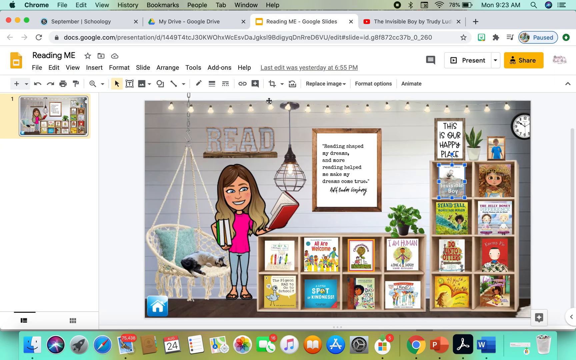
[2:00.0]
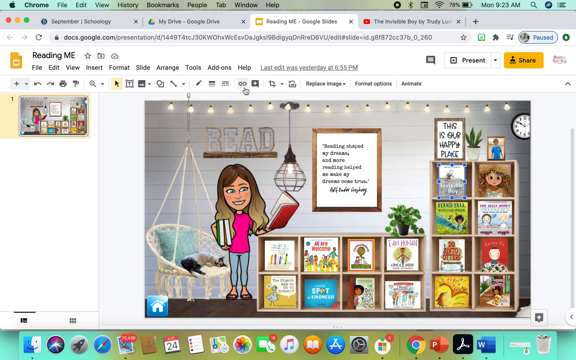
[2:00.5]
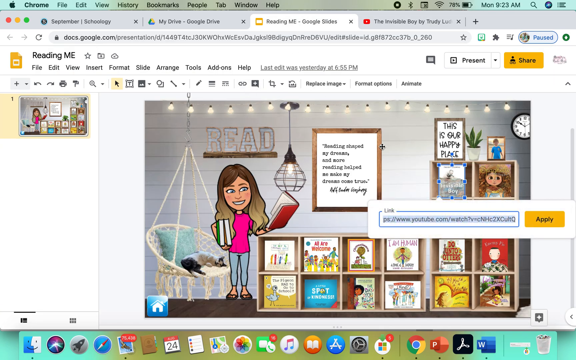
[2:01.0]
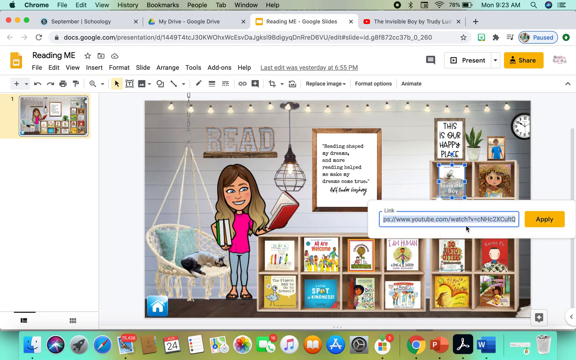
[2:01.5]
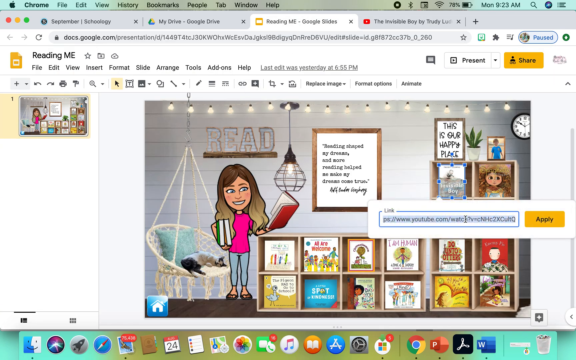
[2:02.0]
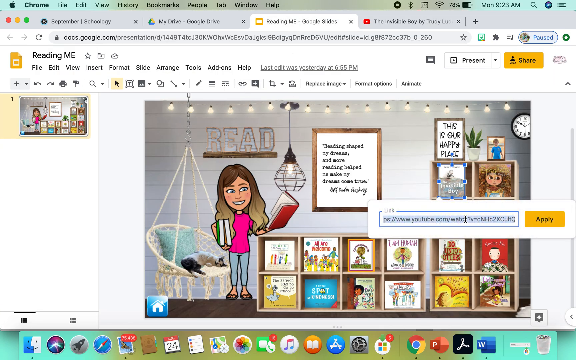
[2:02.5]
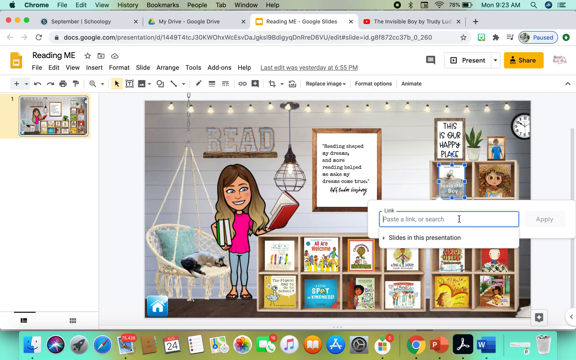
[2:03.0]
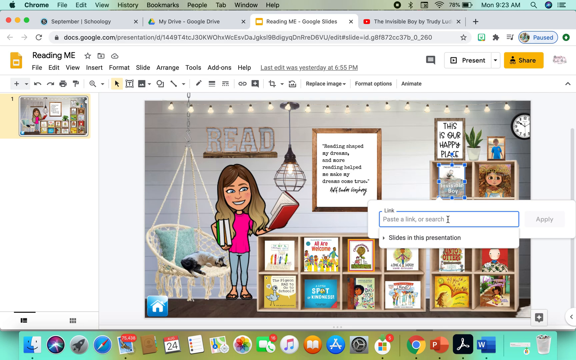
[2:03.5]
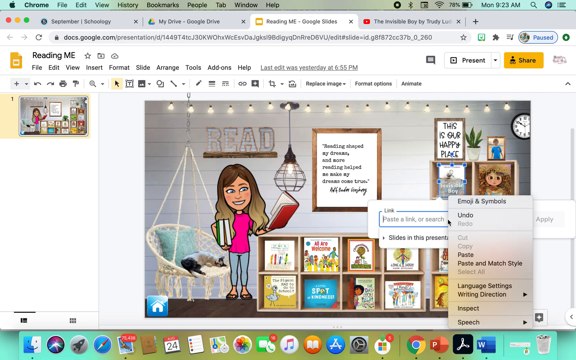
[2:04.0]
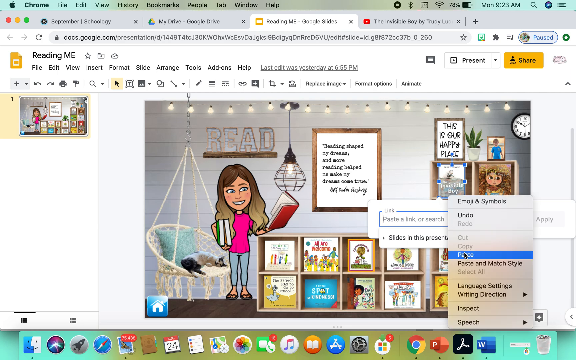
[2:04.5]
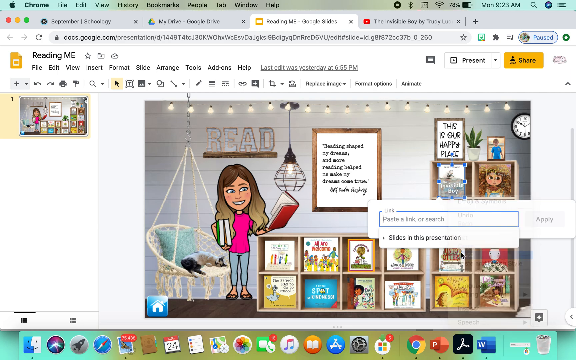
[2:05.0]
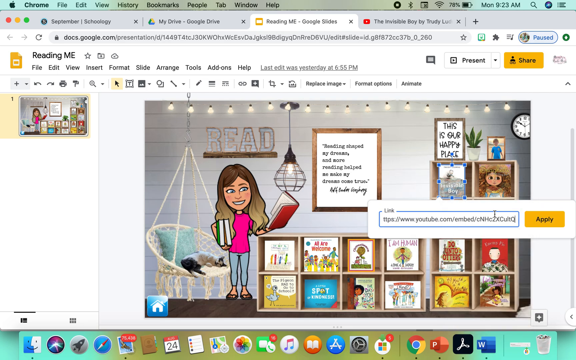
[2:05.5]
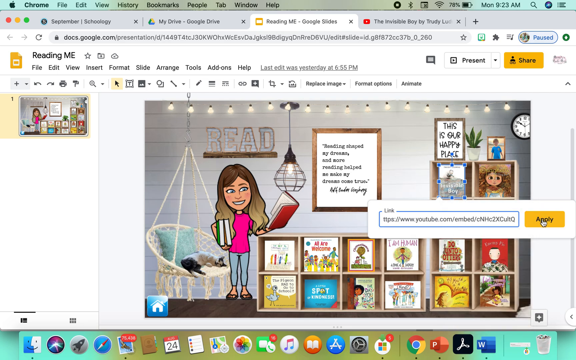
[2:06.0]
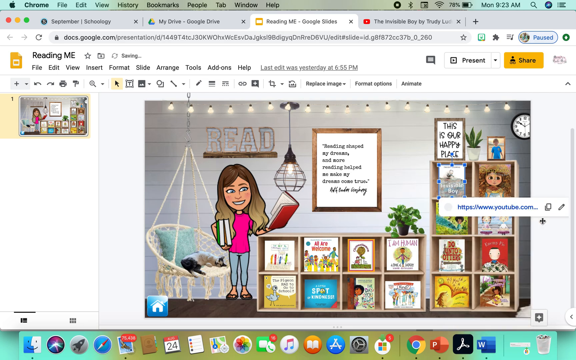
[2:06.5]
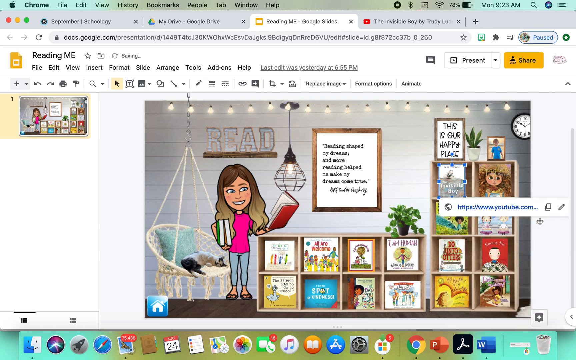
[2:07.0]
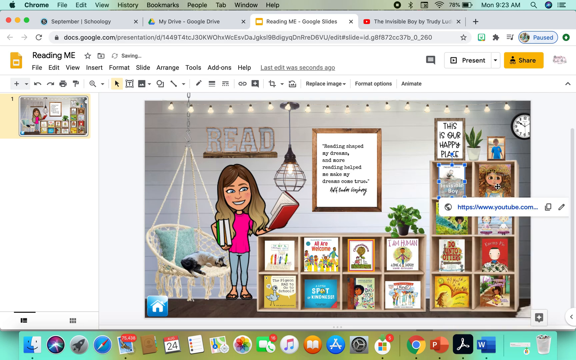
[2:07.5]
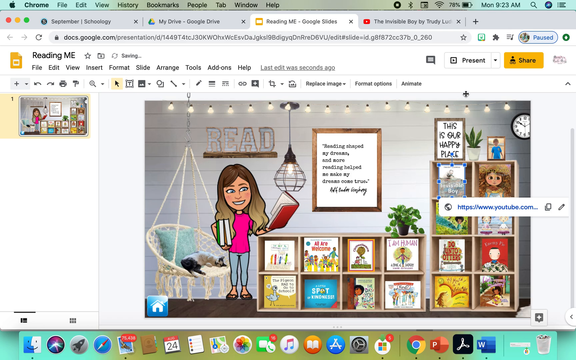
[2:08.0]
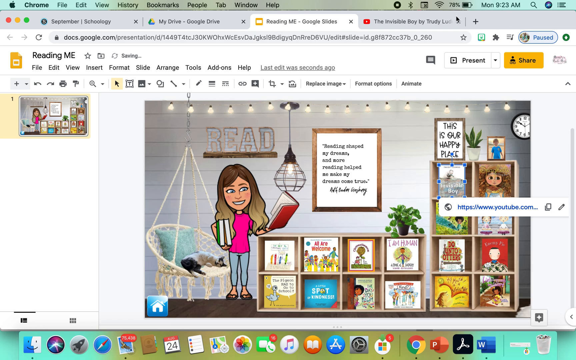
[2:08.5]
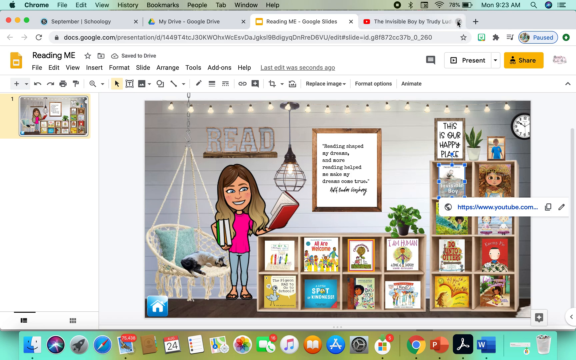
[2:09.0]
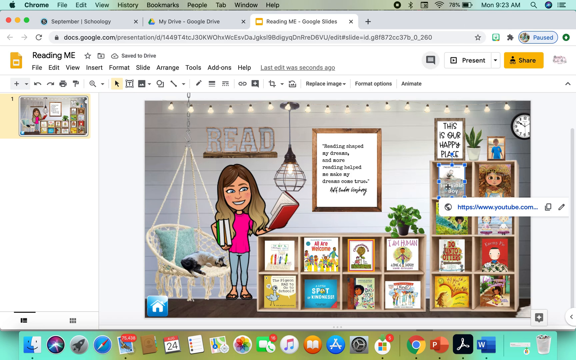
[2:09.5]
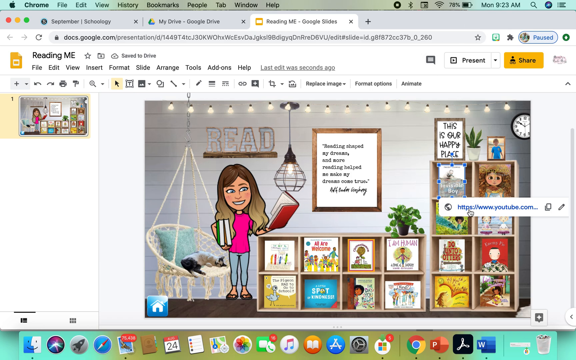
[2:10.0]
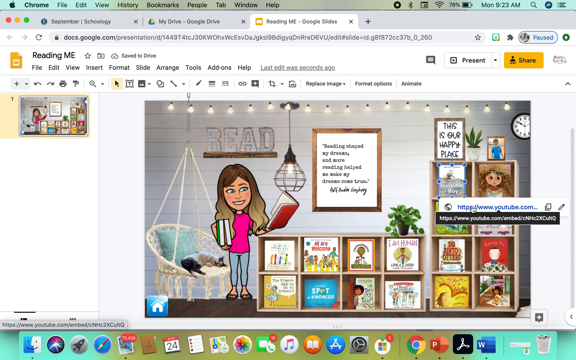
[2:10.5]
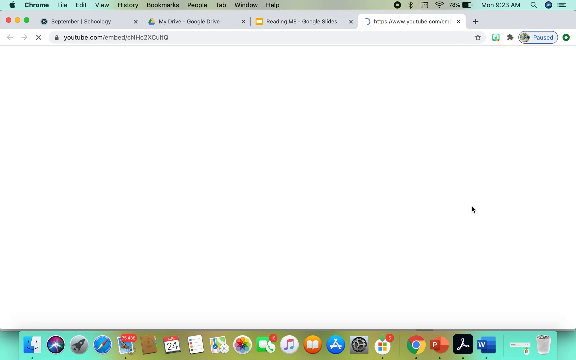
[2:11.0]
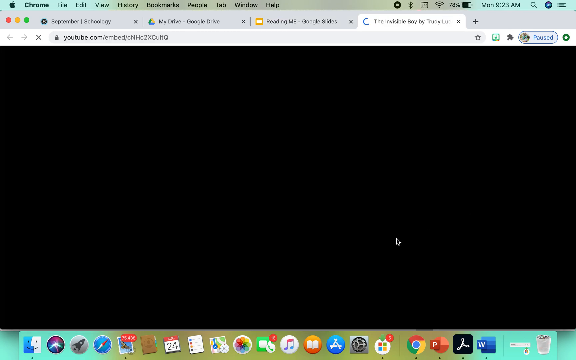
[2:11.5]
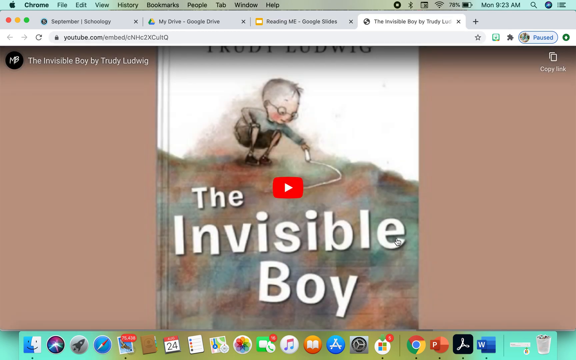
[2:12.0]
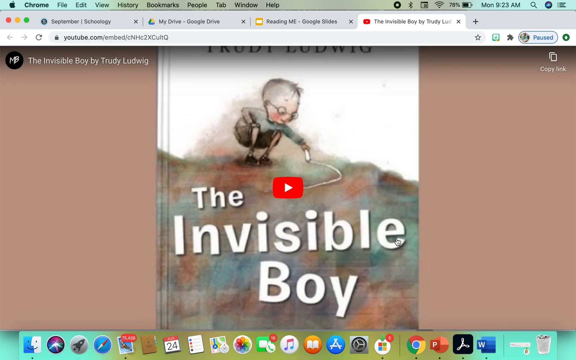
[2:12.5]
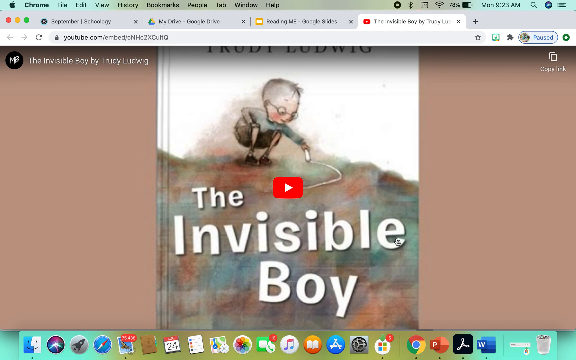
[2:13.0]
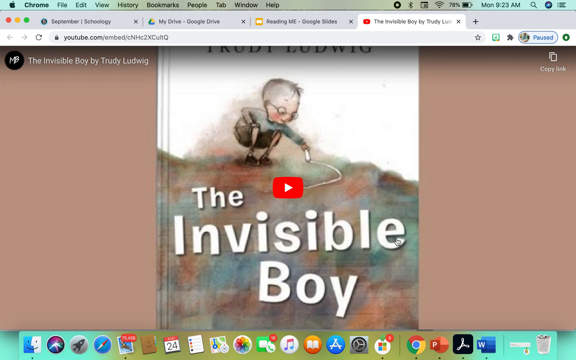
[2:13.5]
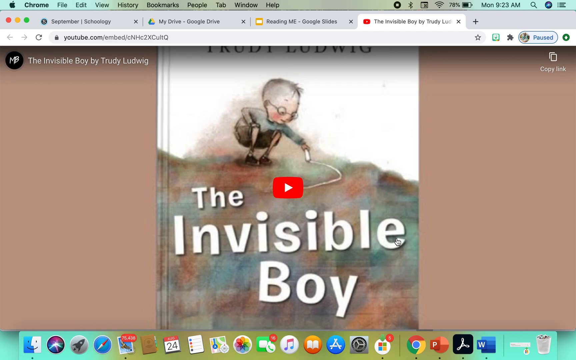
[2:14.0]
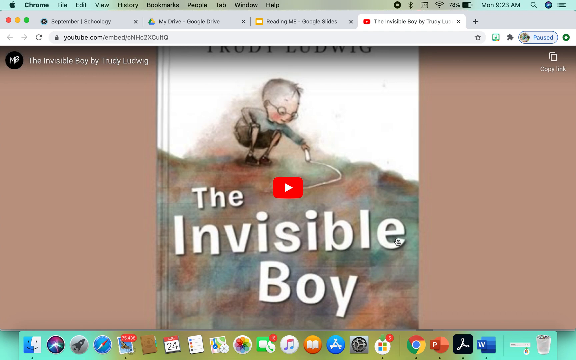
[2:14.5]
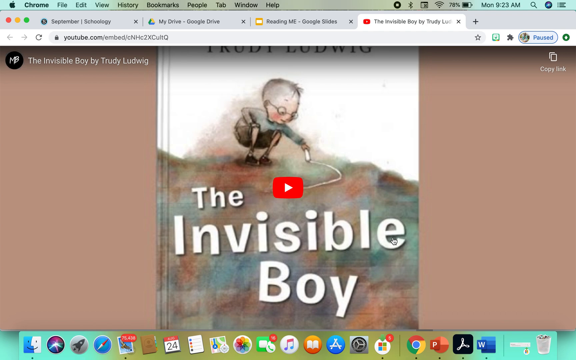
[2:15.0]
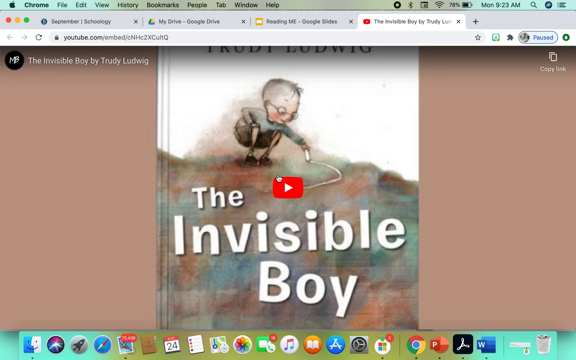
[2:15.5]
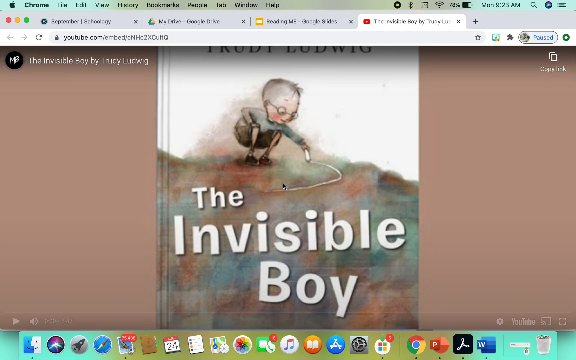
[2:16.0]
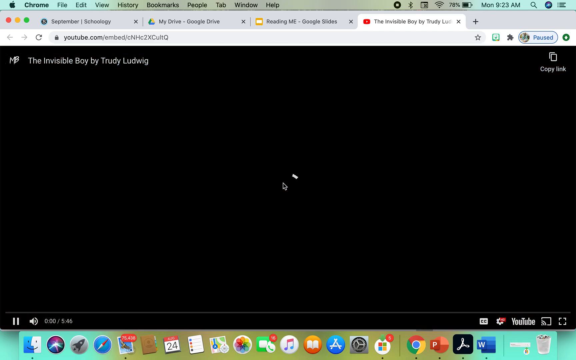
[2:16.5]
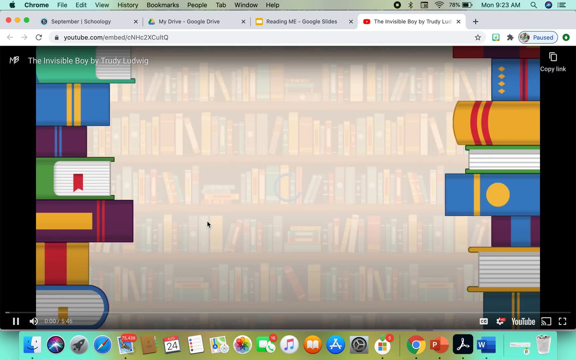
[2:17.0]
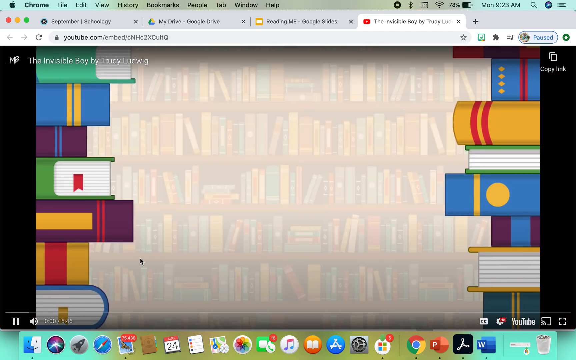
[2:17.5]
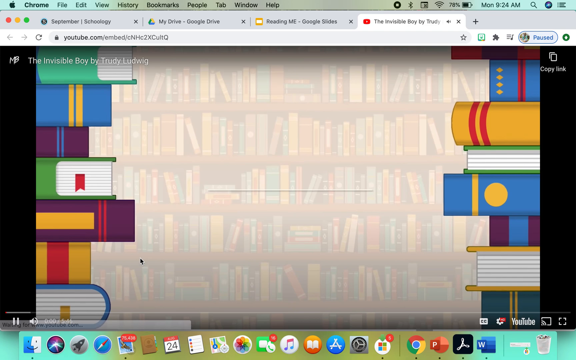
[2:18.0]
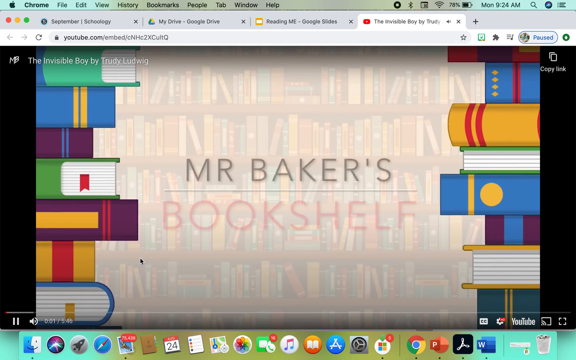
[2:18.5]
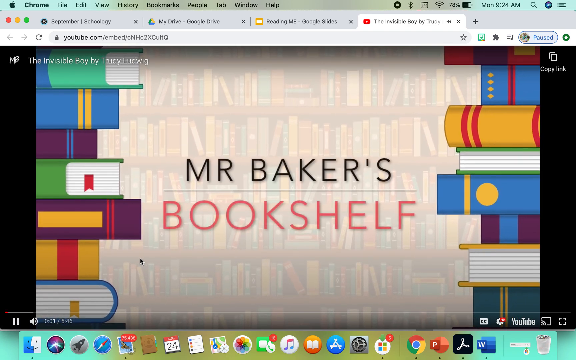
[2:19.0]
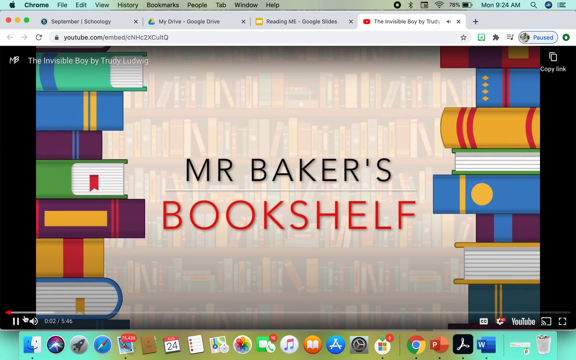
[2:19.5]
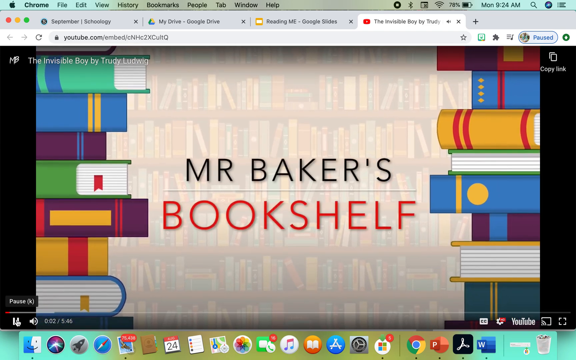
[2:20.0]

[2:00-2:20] On Google Slides, the user clicks the link button on the menu ribbon, which has a lot of options for editing the slide. A window titled "link" appears, with an input box that already has a URL pasted in it and an apply button. The user deletes the previous website address, right-clicks, and chooses paste, changing the link to the YouTube video. They press apply, and another pop-up window appears with a hyperlink to that YouTube video. They click it, and it goes directly to The Invisible Boy by Trudie Ludwig, which takes up the full screen rather than showing the YouTube landing page. They click play, and it goes back to the video for Mr. Baker's Bookshelf.